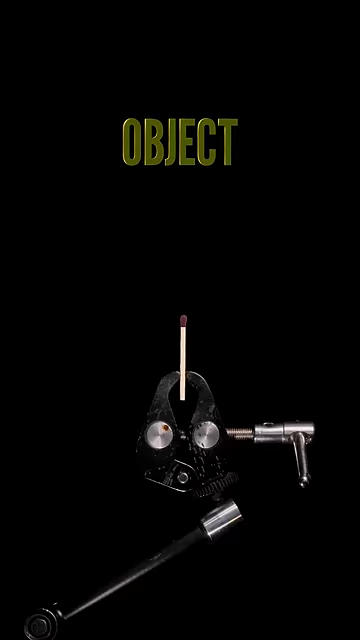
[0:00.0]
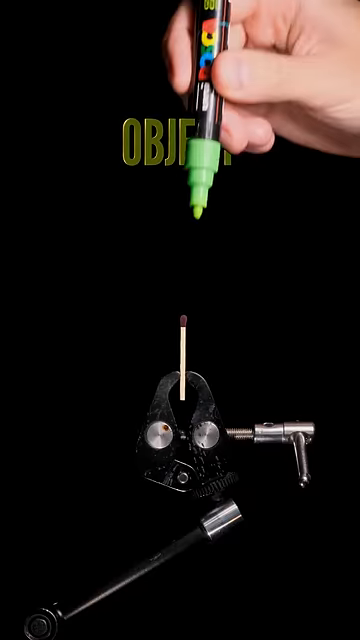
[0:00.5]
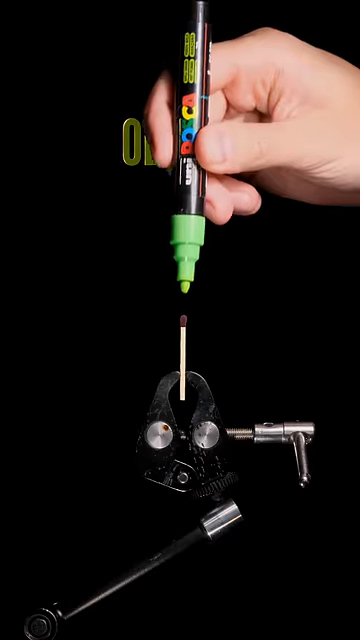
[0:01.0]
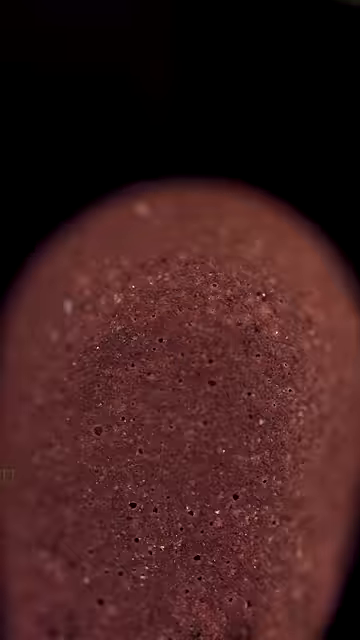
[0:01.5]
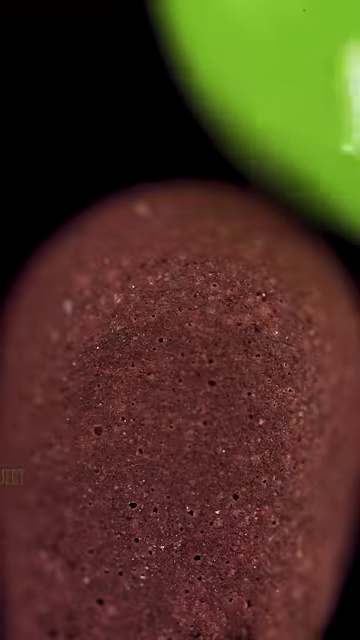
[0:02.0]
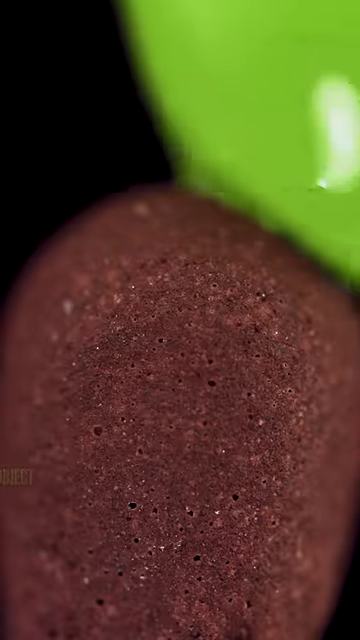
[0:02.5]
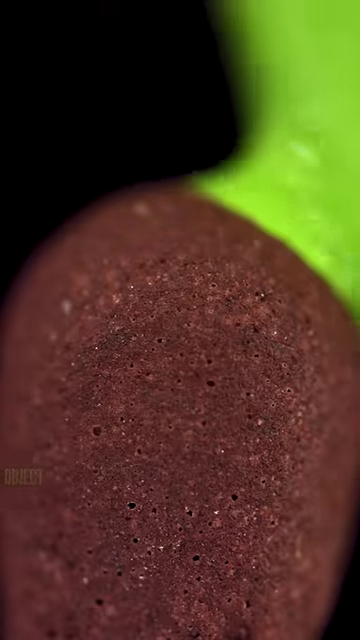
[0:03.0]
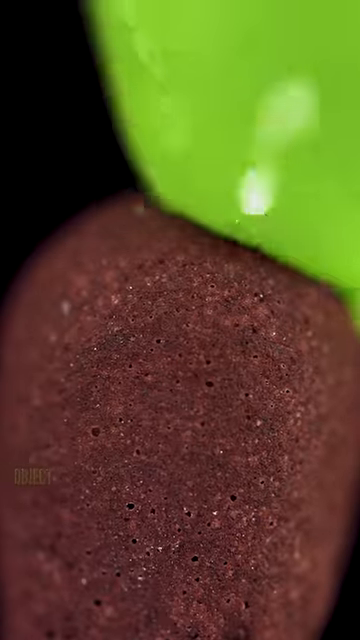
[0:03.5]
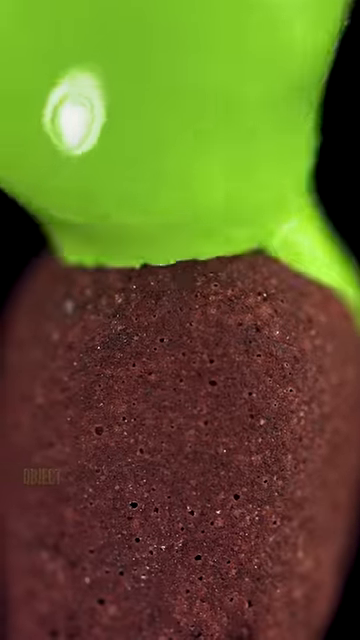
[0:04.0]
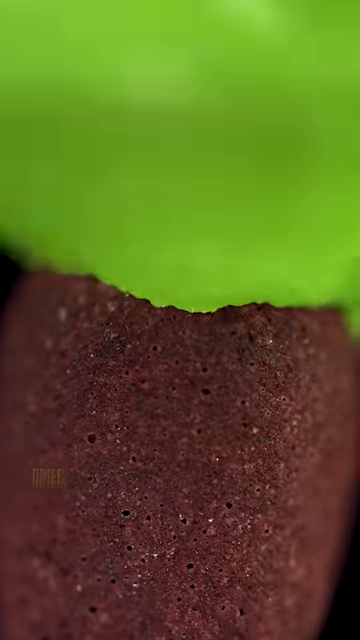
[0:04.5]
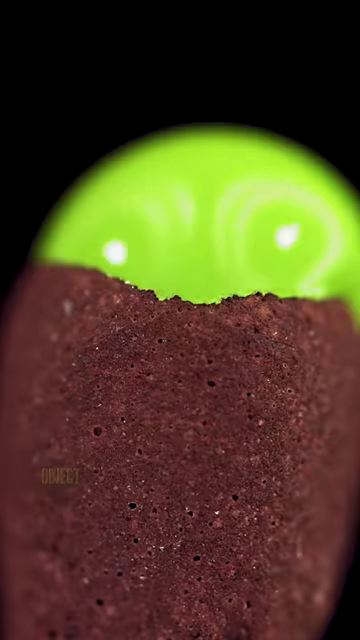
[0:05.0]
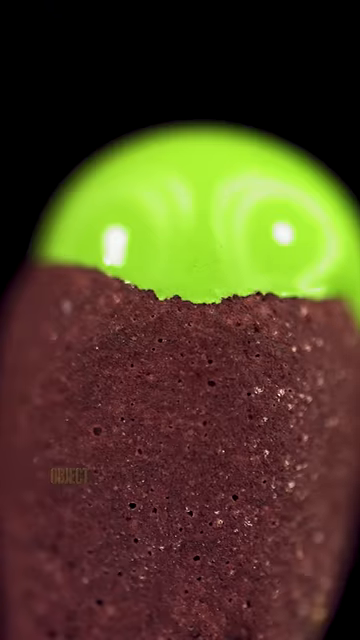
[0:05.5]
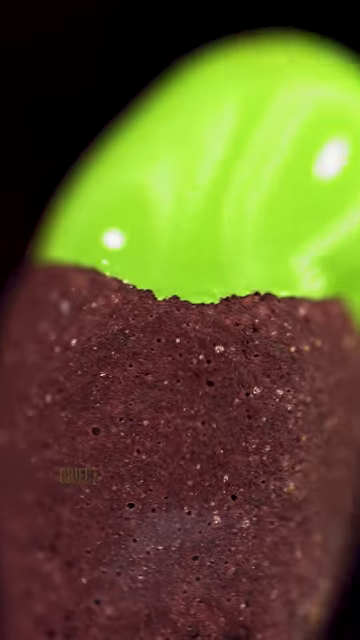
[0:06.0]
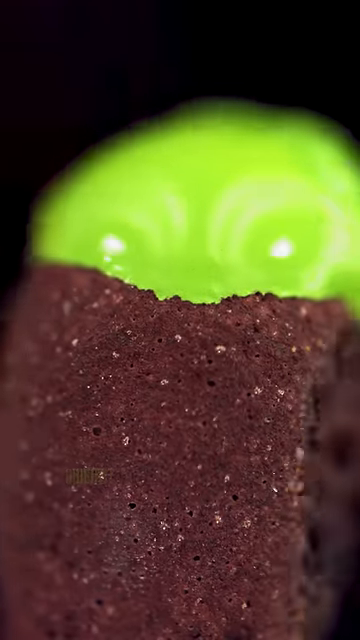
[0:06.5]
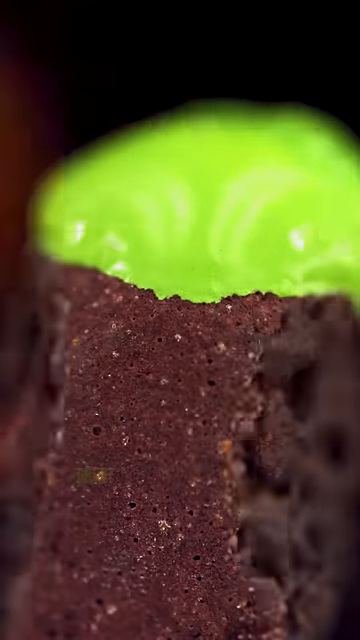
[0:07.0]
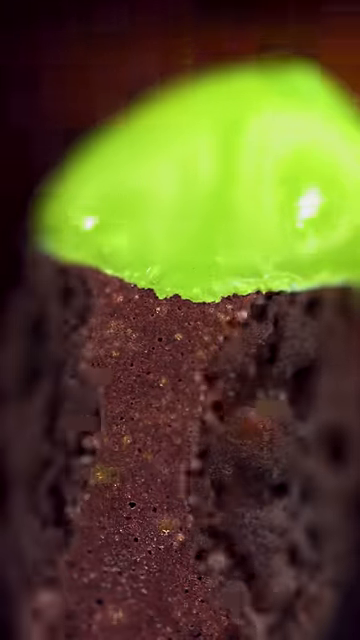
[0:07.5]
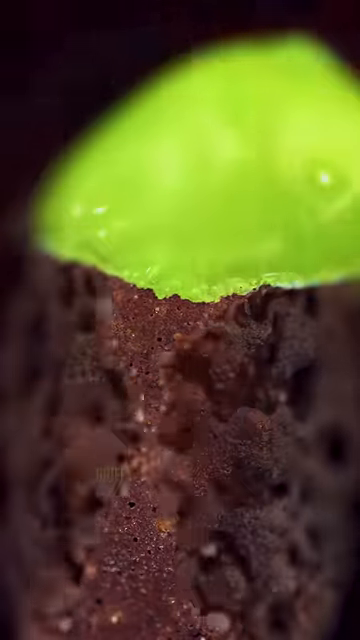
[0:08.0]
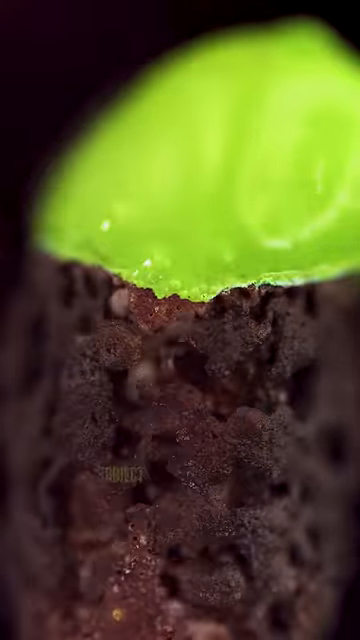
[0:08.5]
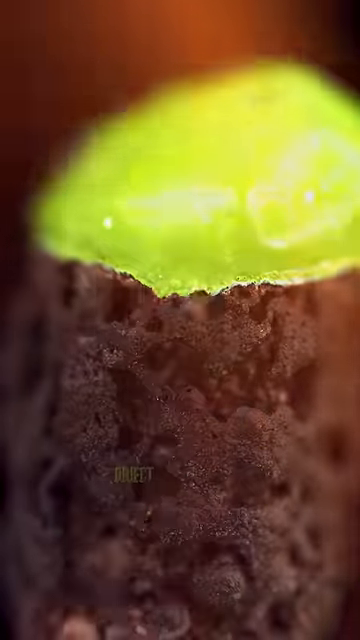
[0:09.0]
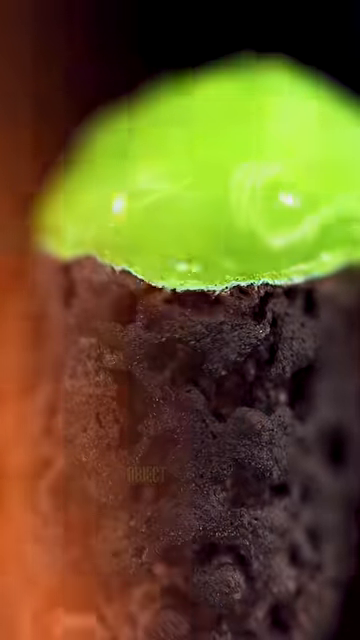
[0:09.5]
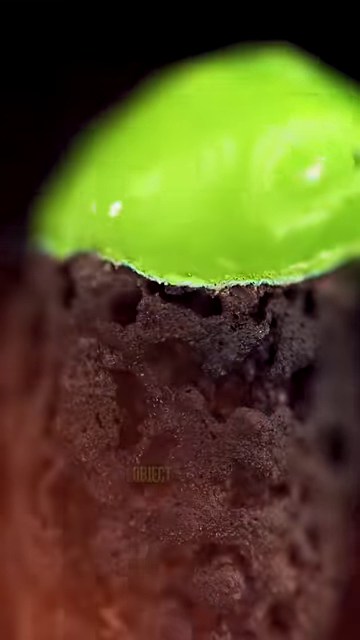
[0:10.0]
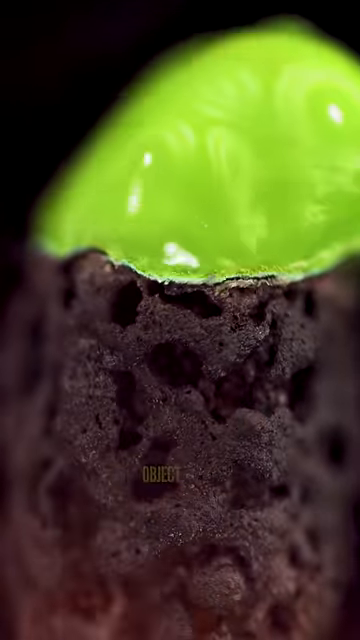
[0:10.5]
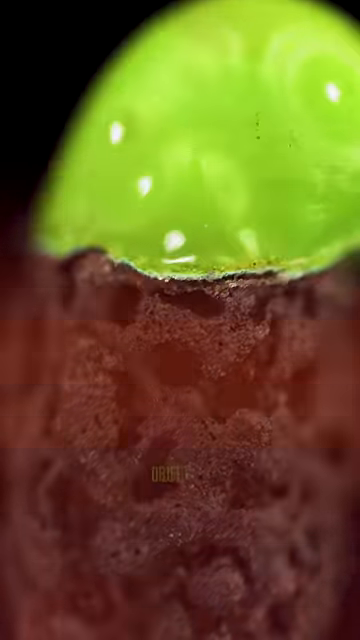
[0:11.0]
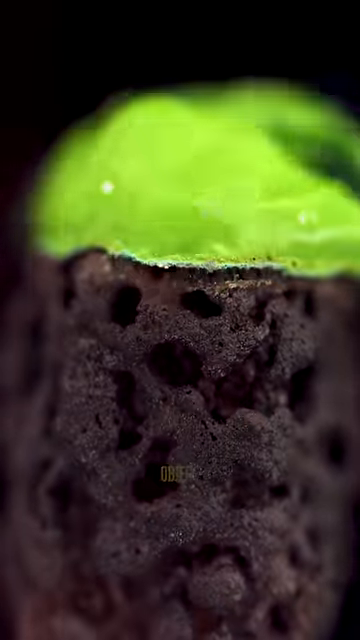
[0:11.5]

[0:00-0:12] In a close-up against a black background, what looks like the tip of a match is held in some sort of clamp device. A green pen with multicolored writing on its tube kind of comes down, and the pen touches the match, putting green paint on the top of the match head. The match then kind of lights on fire: its orange reddish-brown color kind of dissolves into black, and flames appear on the periphery of the match head, apparently from some sort of chemical reaction. The green paint on top kind of bubbles. The shot ends on a close-up of the burnt match head, showing the crevices the fire has created in the match head or wood.